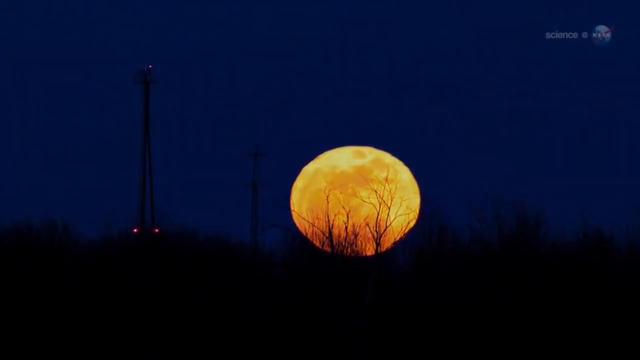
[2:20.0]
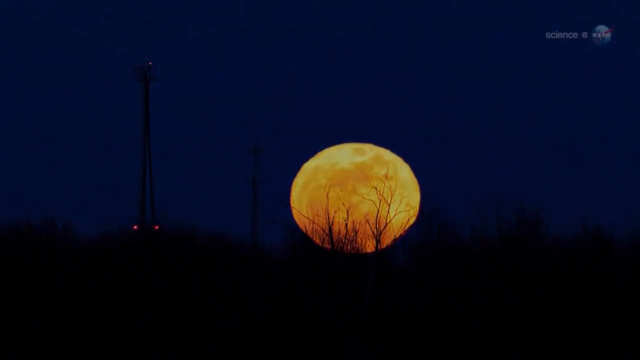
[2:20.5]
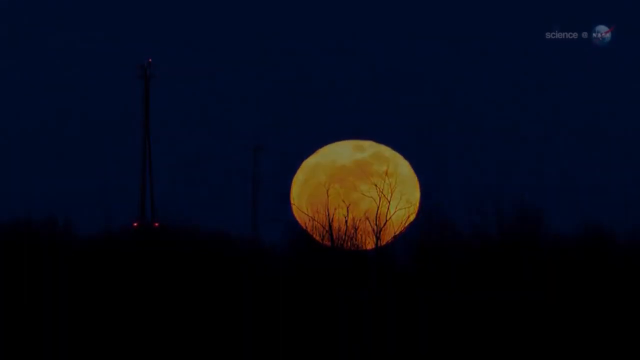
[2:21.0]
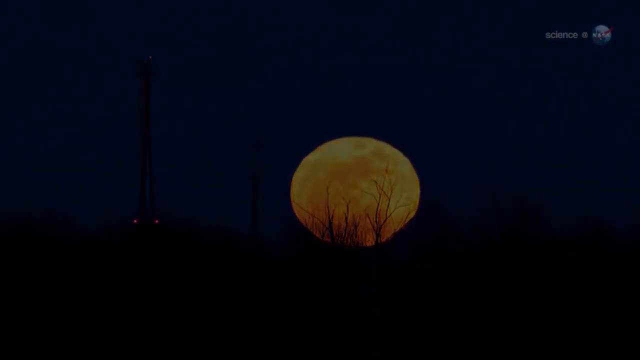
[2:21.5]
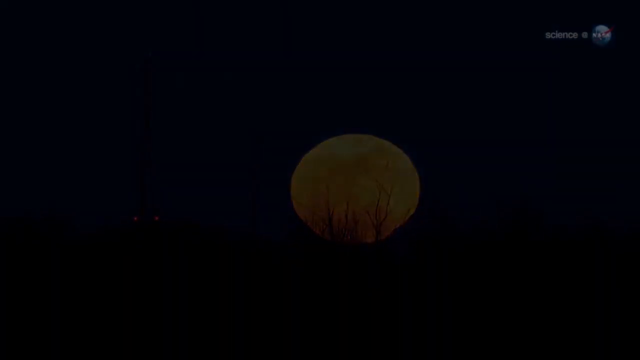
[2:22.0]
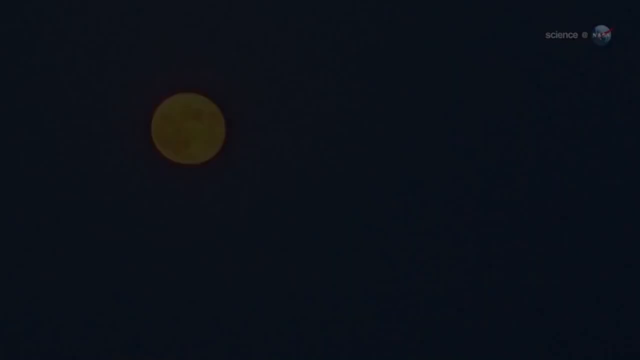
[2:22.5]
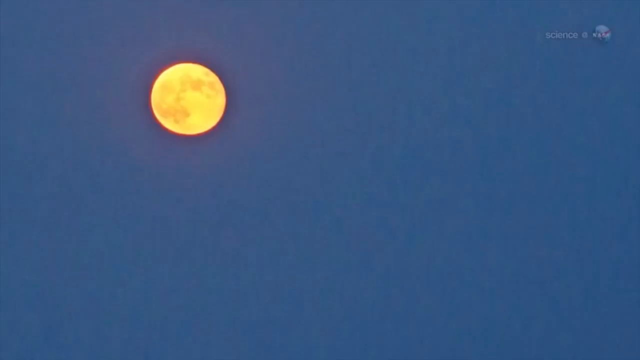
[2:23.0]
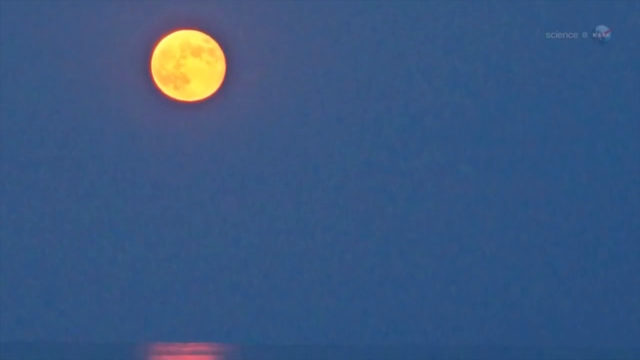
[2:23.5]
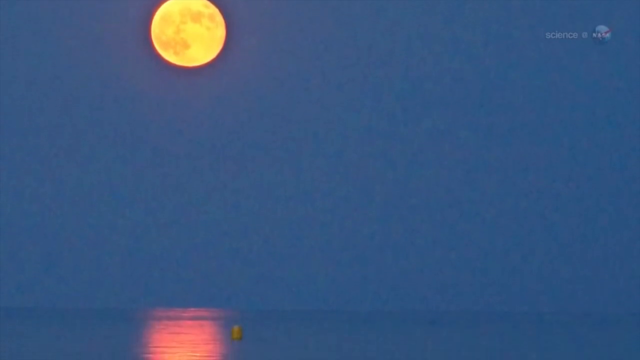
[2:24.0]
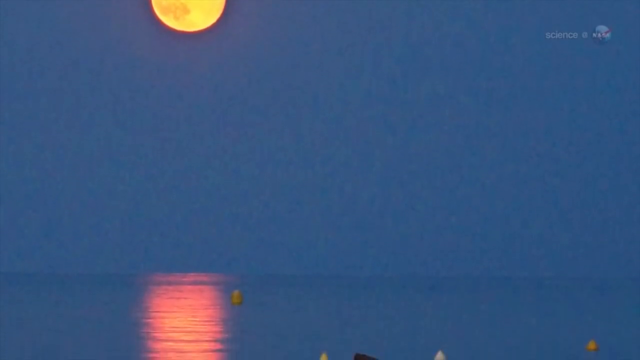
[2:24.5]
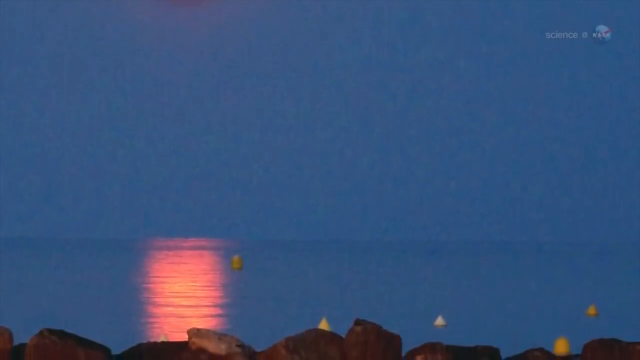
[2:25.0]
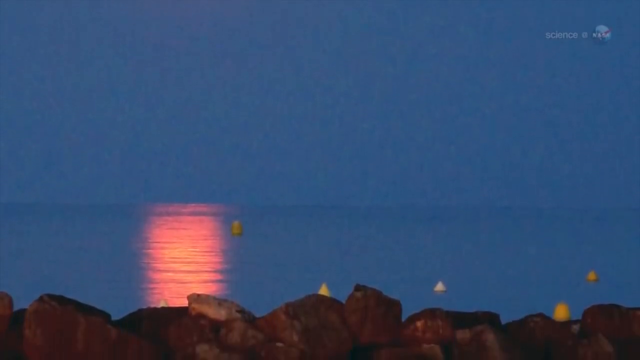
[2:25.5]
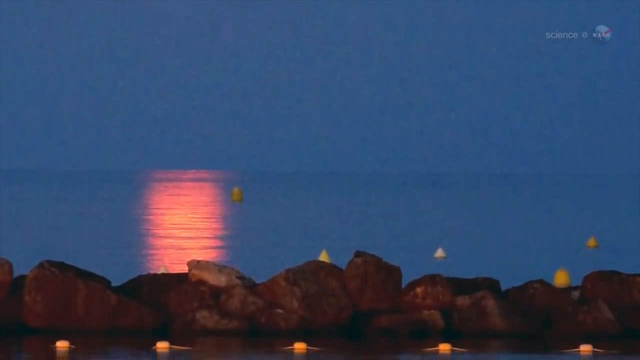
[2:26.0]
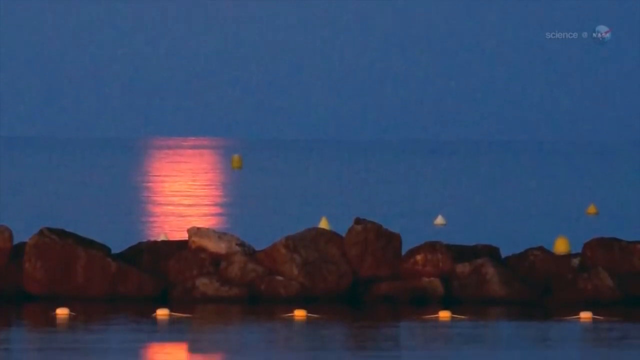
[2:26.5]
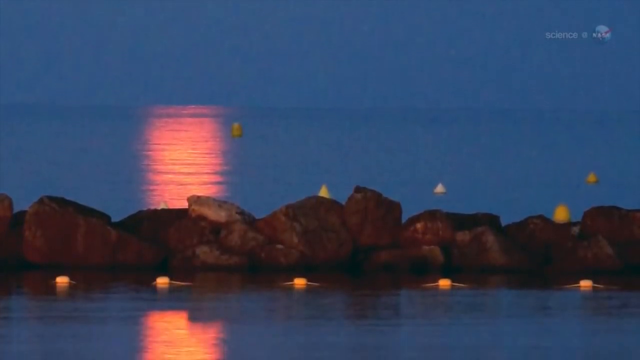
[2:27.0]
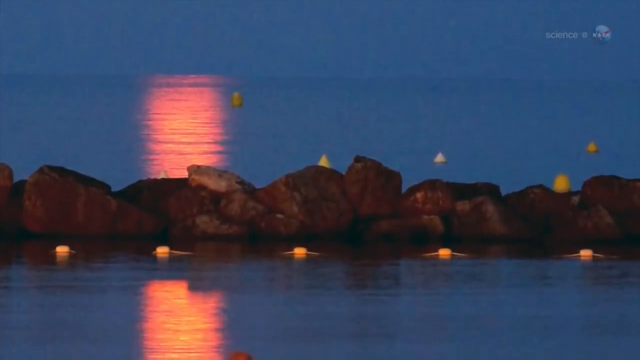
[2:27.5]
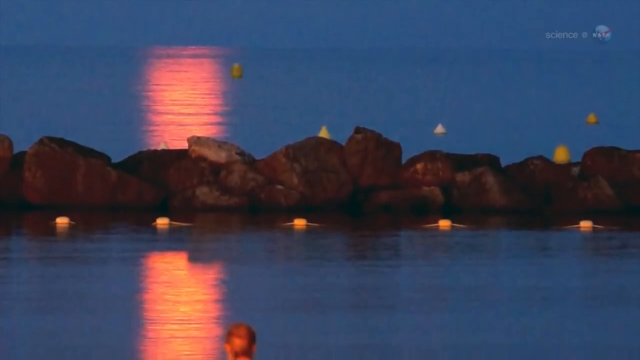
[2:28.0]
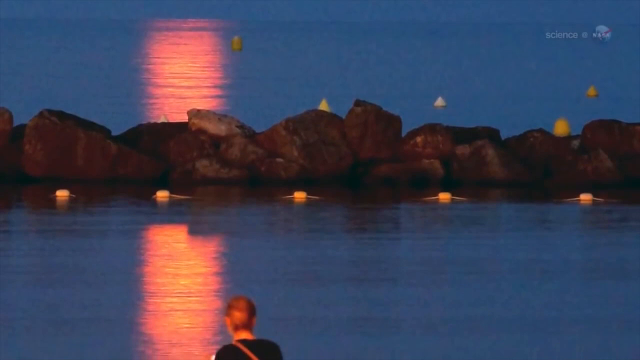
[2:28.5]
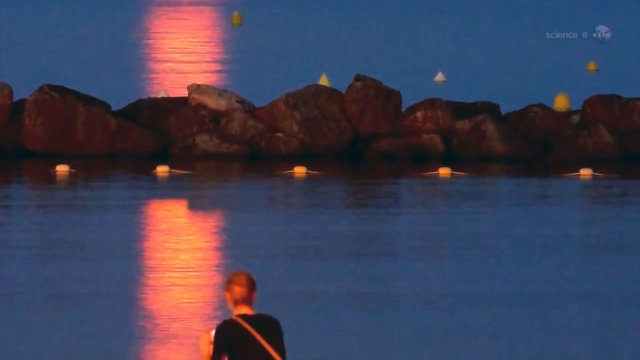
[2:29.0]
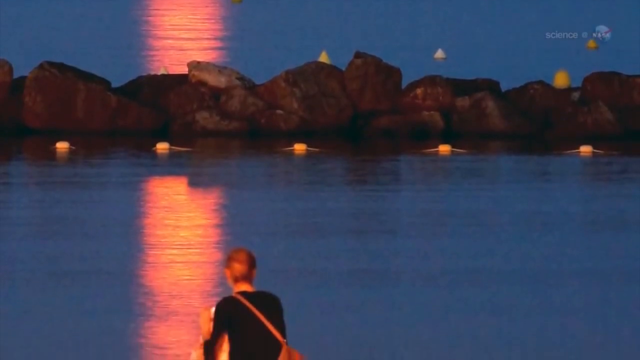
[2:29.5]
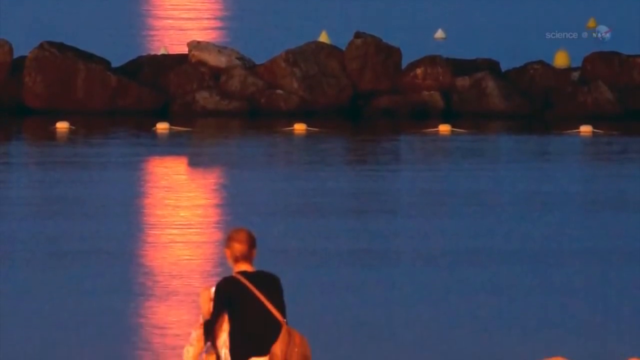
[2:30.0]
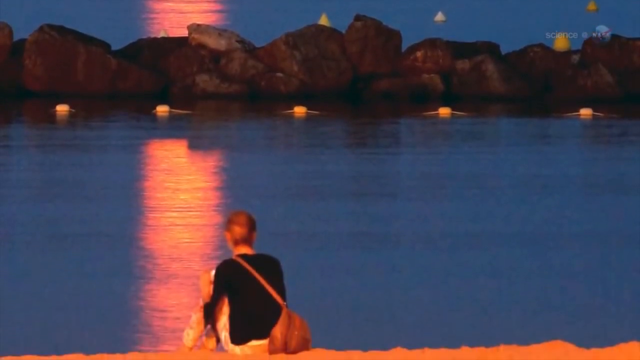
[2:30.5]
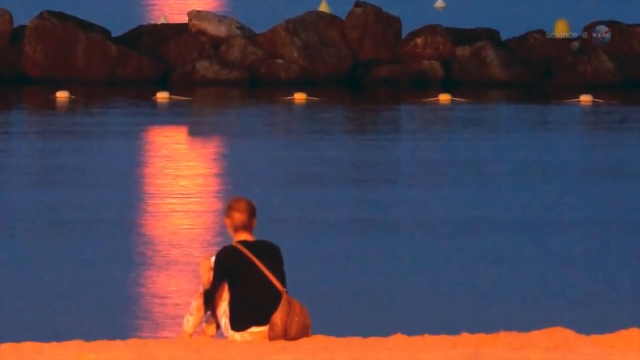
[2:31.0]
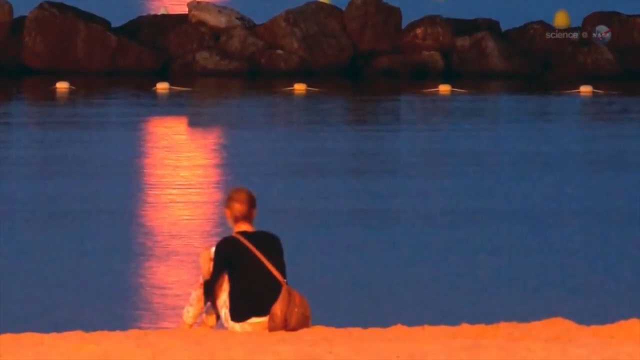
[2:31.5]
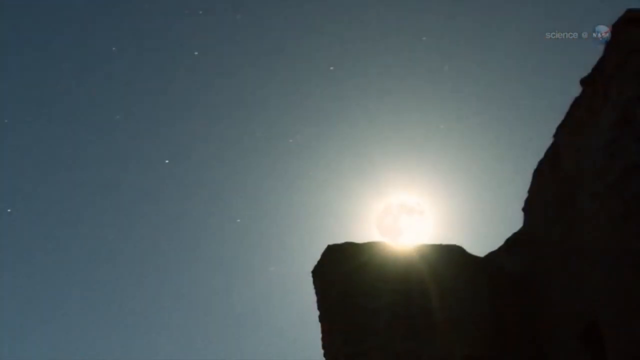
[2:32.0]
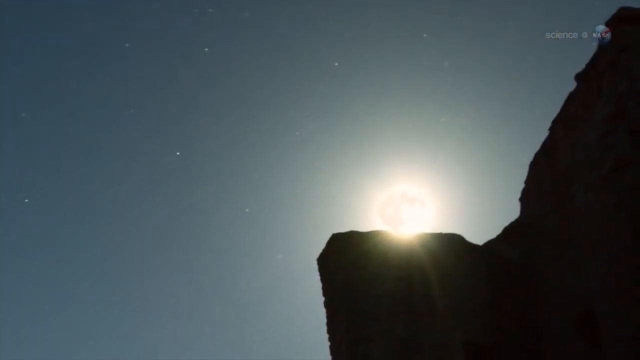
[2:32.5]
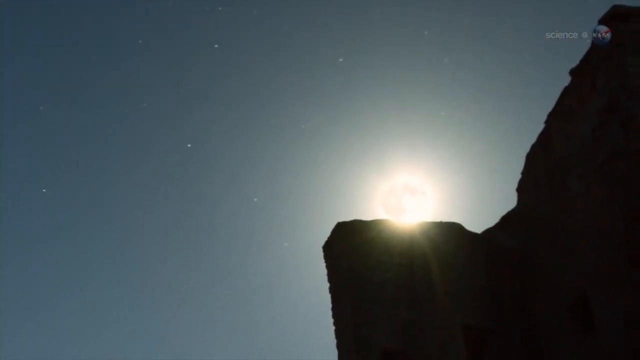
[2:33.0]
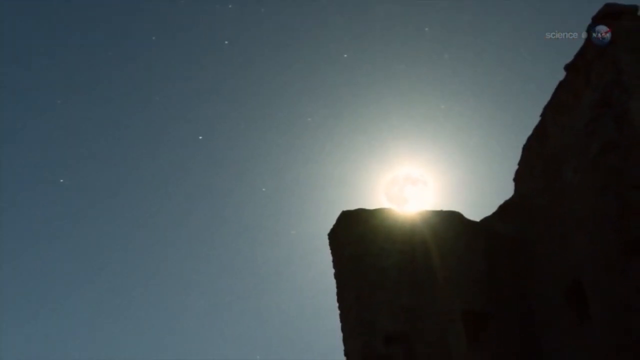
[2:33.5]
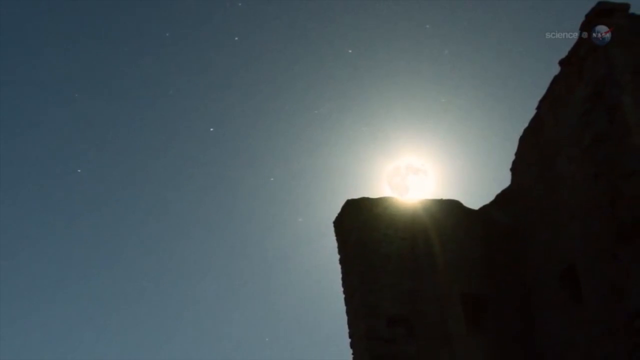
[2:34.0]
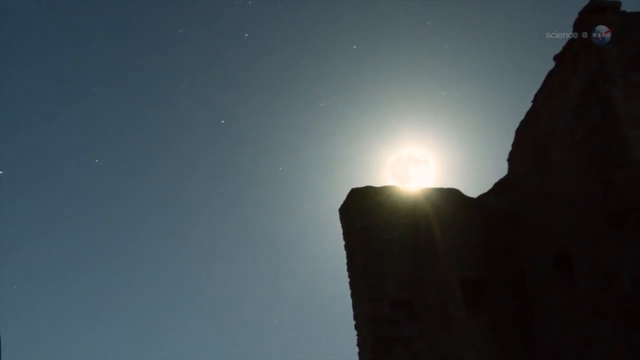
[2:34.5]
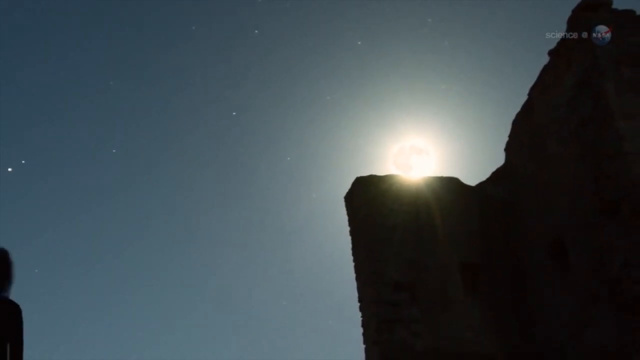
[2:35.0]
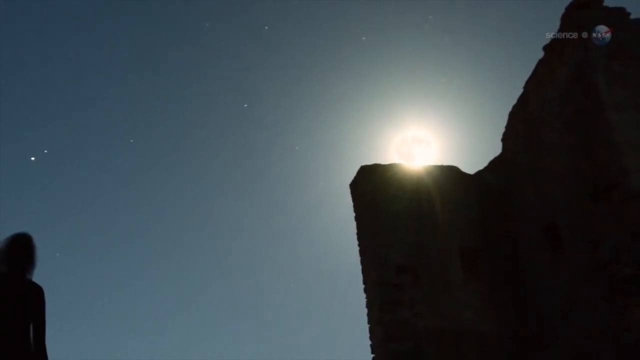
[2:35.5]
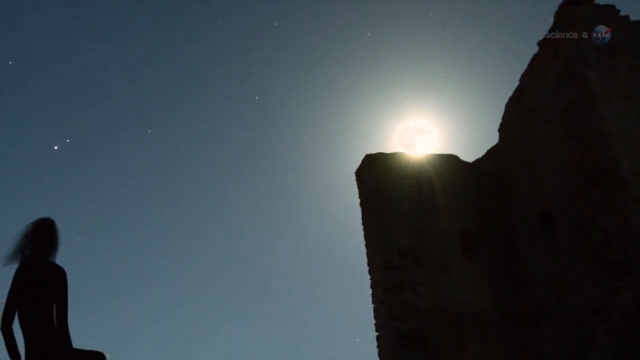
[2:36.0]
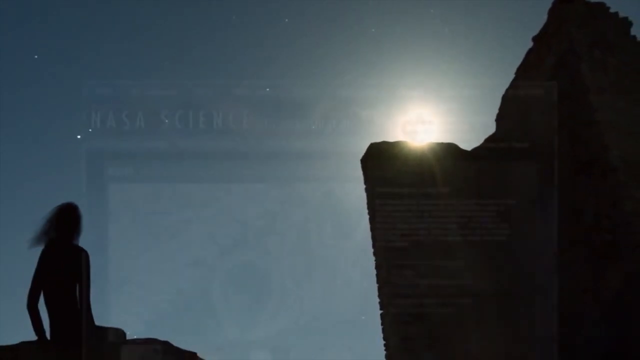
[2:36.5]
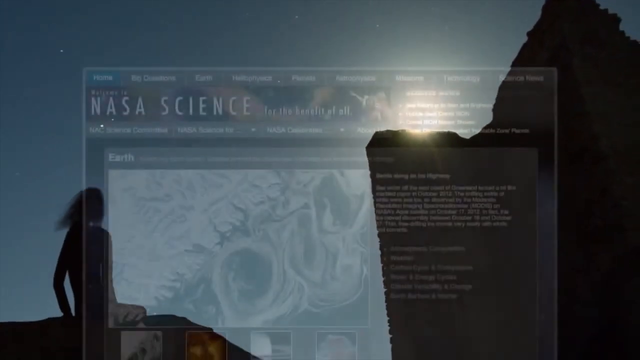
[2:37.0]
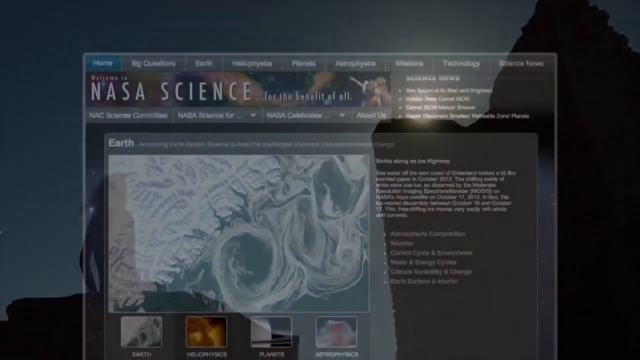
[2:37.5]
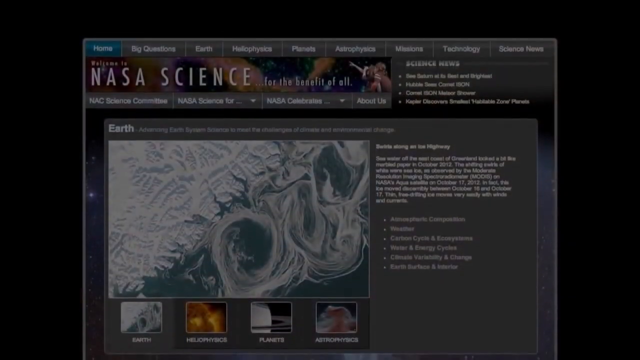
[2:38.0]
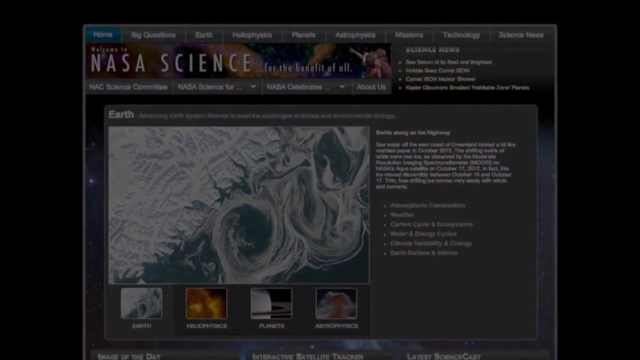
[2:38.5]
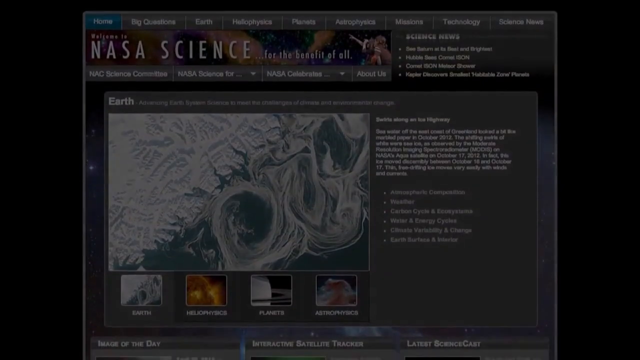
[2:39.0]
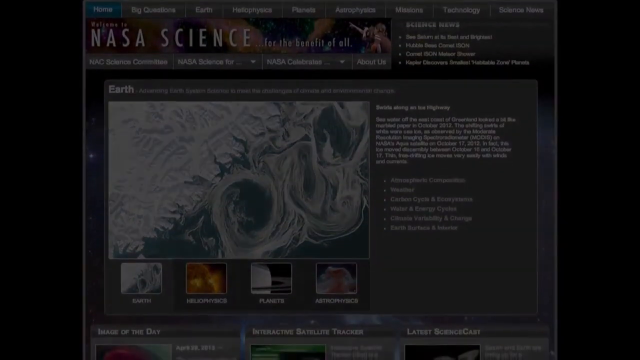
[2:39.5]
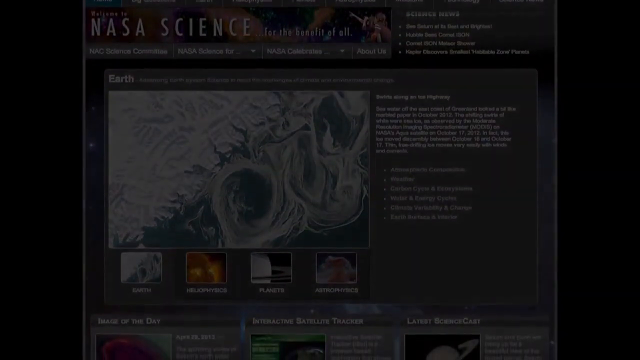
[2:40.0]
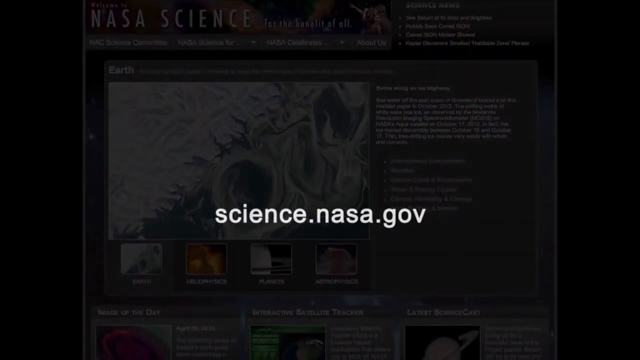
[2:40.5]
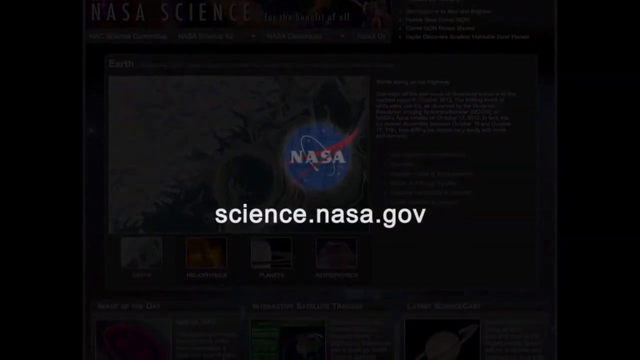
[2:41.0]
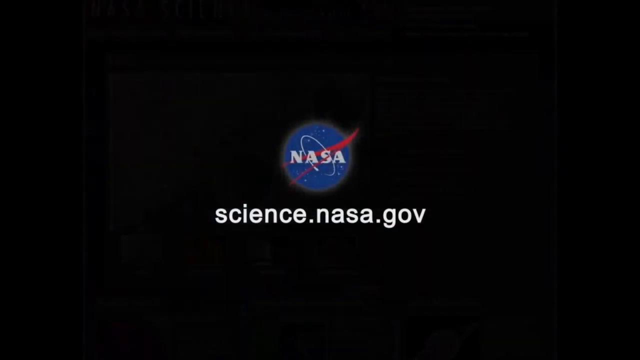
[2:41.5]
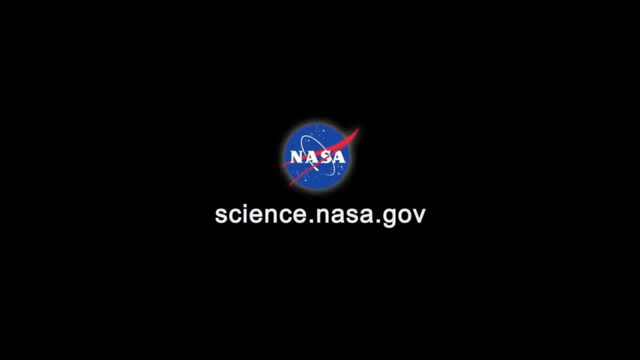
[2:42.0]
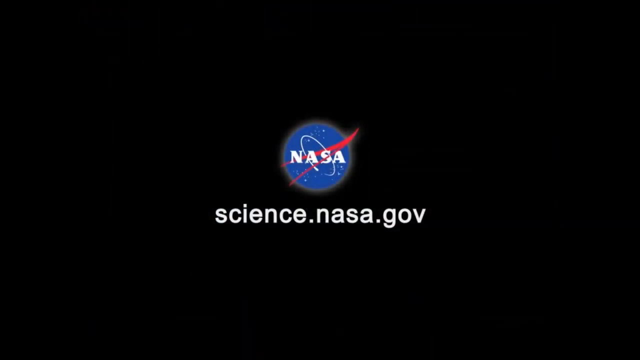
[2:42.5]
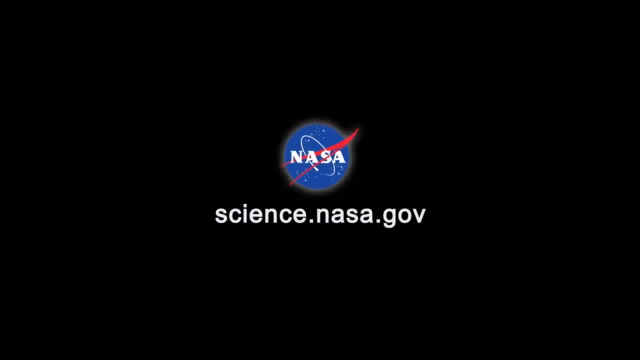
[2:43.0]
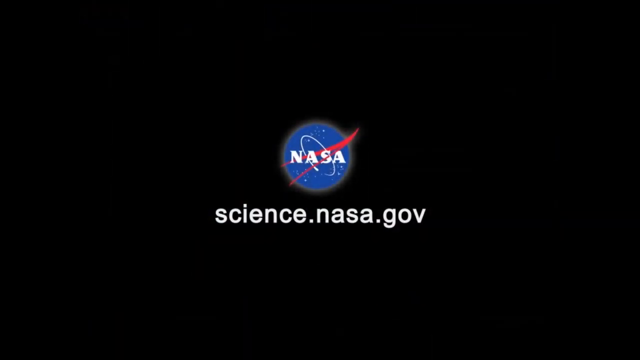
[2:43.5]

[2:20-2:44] The scene transitions from the very dark navy sky with the big moon to a smaller, yellowish moon near the top left corner against a blue sky, which looks like a painting. The camera pans down to show the moon's reflection on a large body of water with a bunch of yellow objects floating in it, and the outline of some large rocks near the bottom of the image. Continuing down, the reflection extends past the rocks, and a person is standing or sitting on a shoreline with a brown bag across one shoulder. It transitions to what looks like a bright light, possibly the sun or possibly a bright moon, against the silhouette of a mountain or hill, with stars in the sky. The view continues to pan out, showing a person in the bottom left corner. It then transitions to what looks like an image of a web page; most of the text cannot be made out except "NASA science" at the top. At the very end, "science.nasa.gov" appears with the NASA logo.